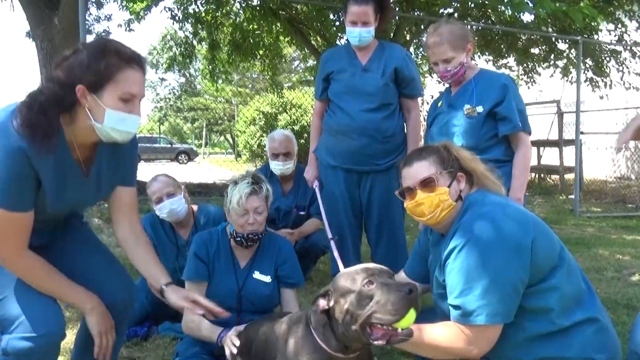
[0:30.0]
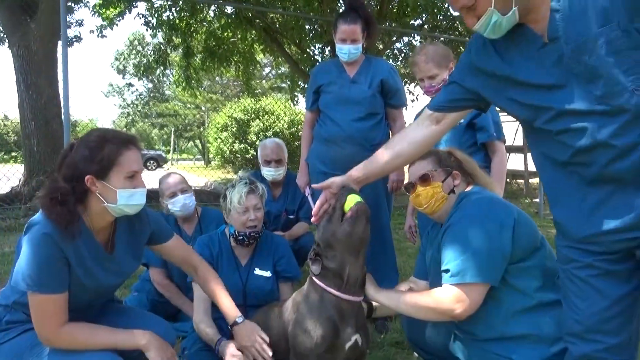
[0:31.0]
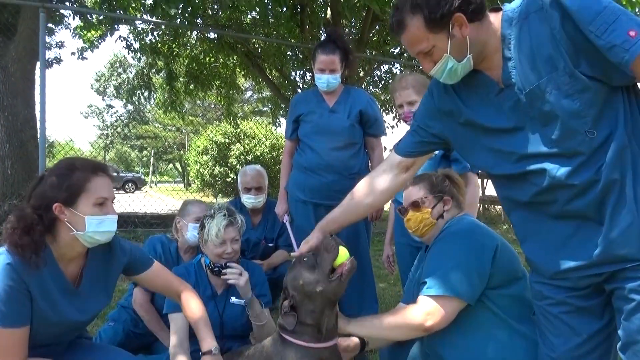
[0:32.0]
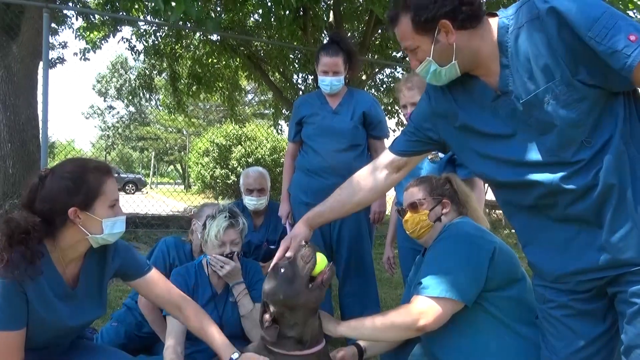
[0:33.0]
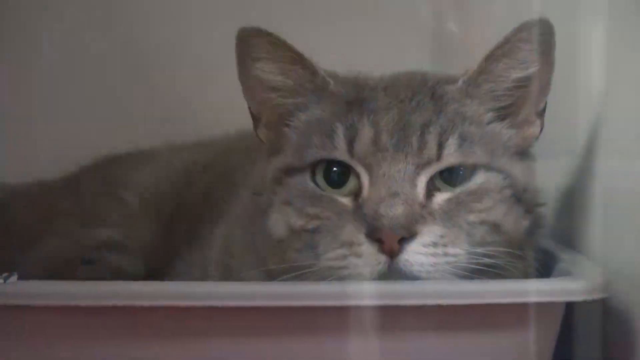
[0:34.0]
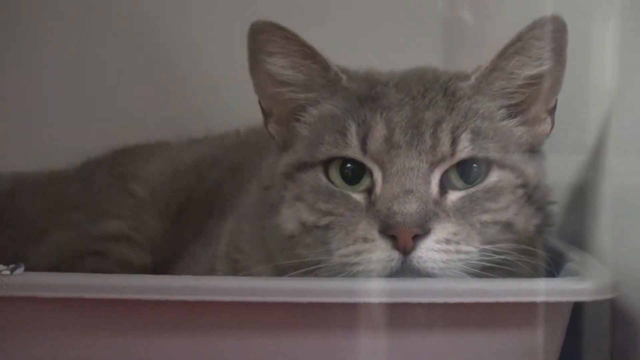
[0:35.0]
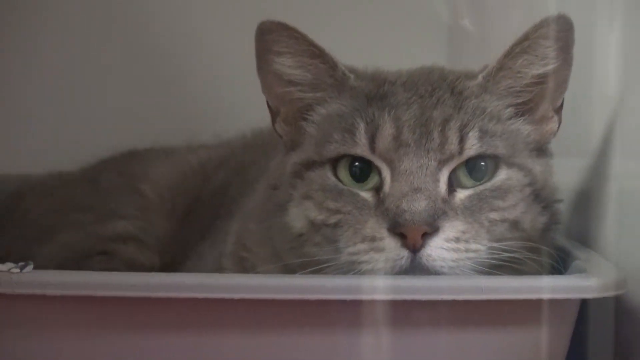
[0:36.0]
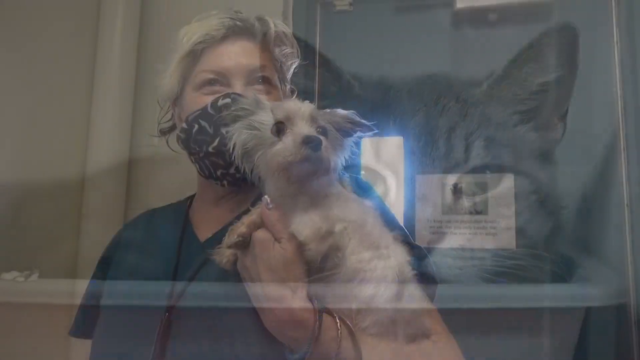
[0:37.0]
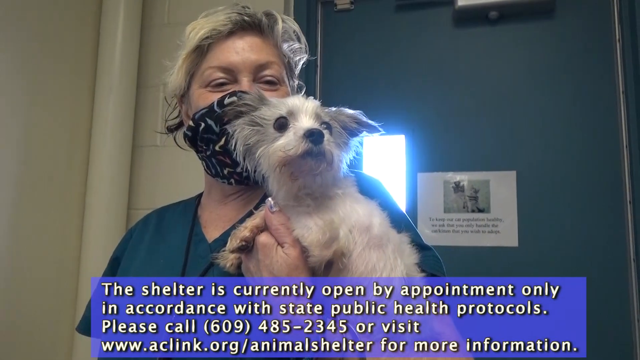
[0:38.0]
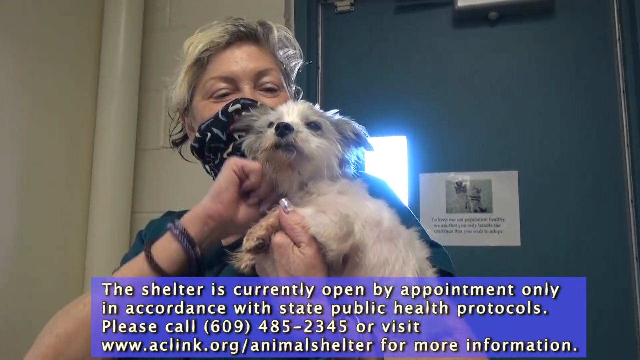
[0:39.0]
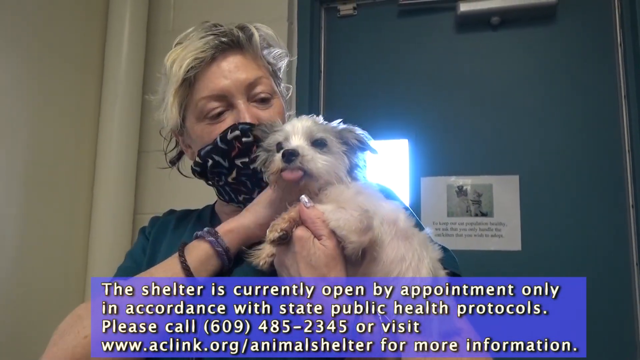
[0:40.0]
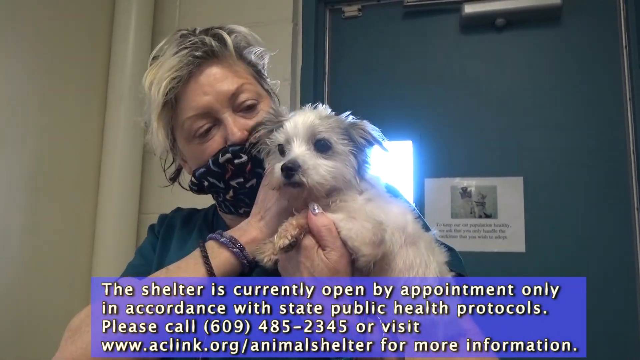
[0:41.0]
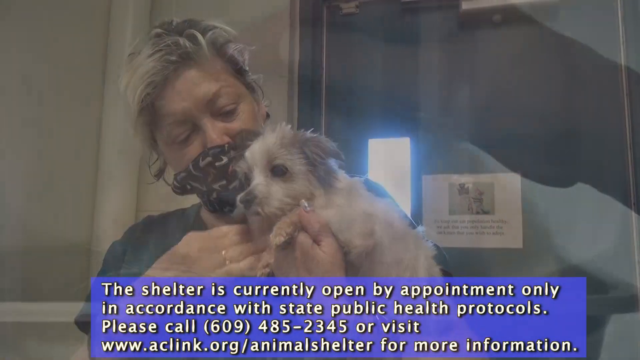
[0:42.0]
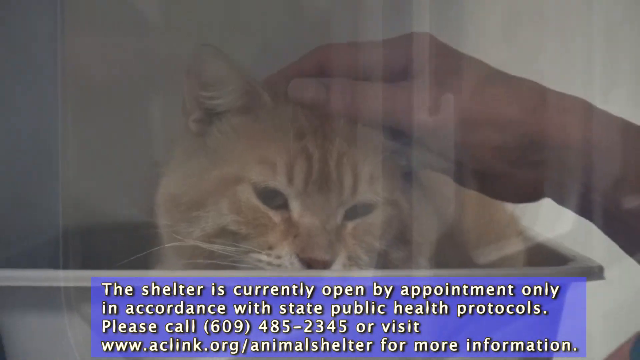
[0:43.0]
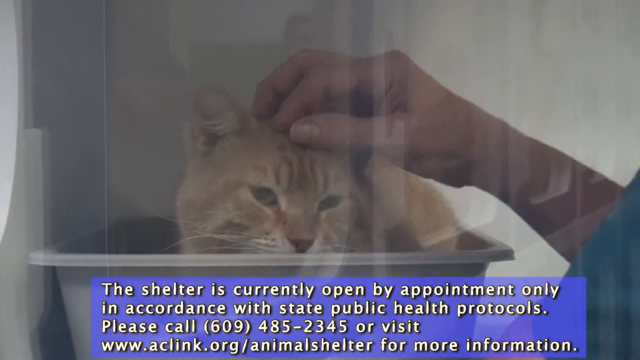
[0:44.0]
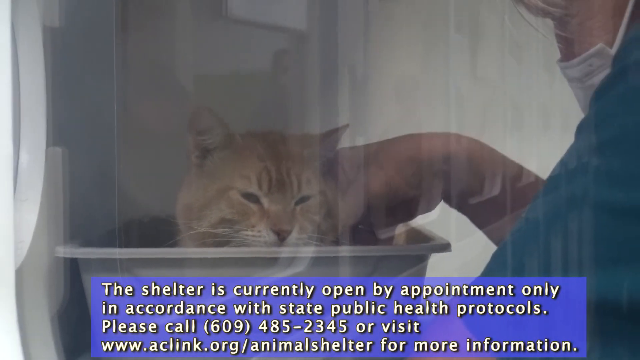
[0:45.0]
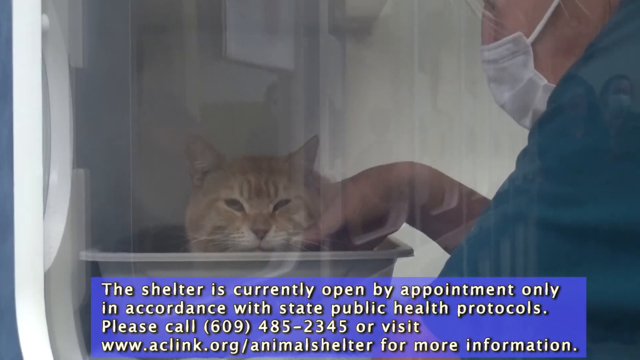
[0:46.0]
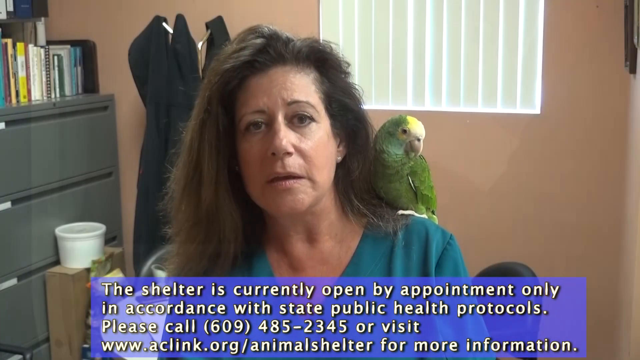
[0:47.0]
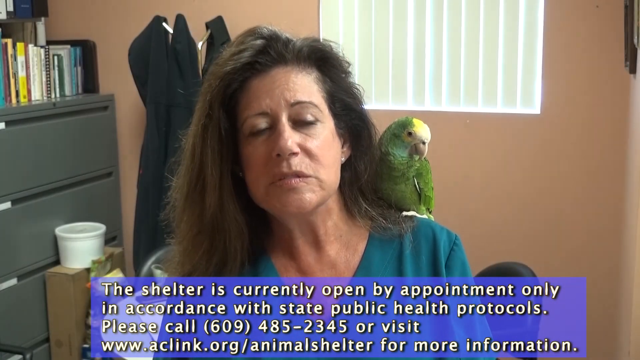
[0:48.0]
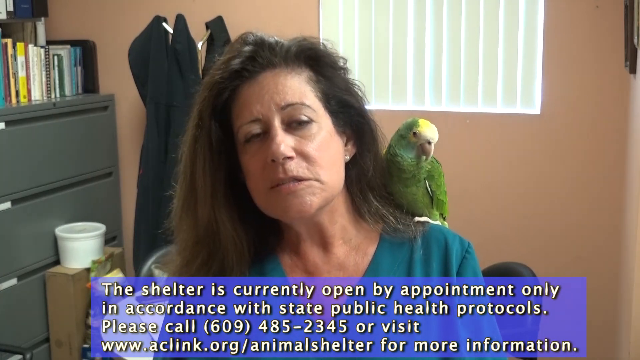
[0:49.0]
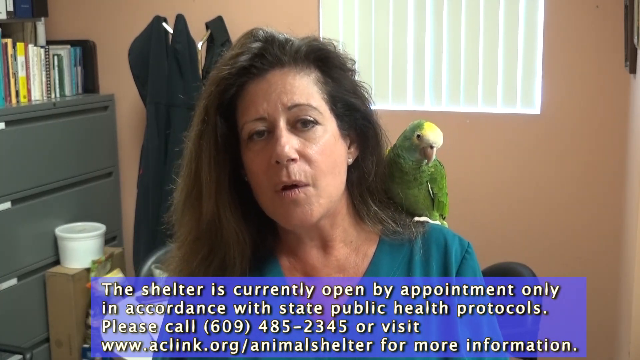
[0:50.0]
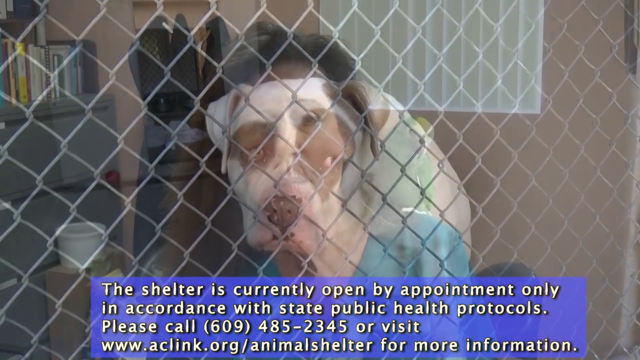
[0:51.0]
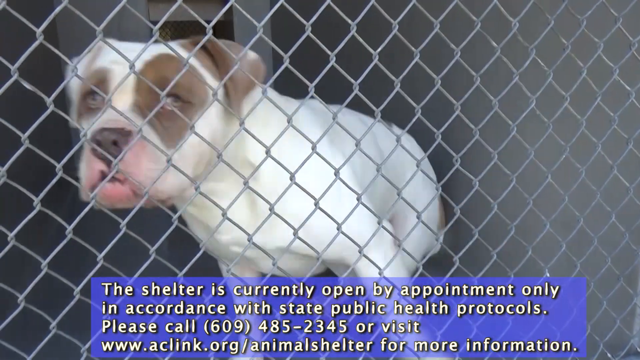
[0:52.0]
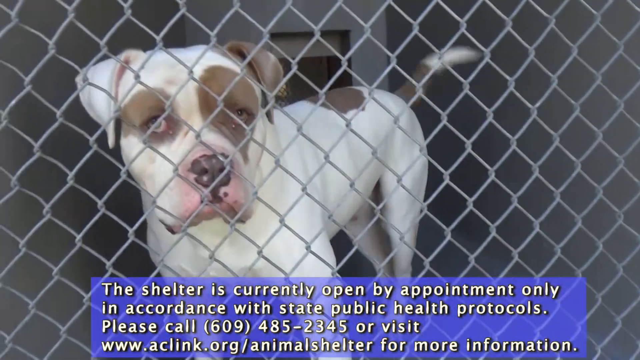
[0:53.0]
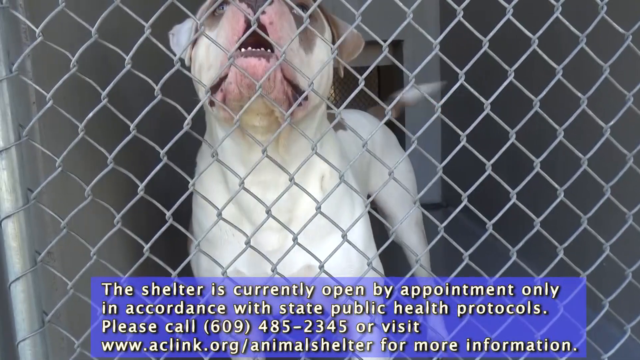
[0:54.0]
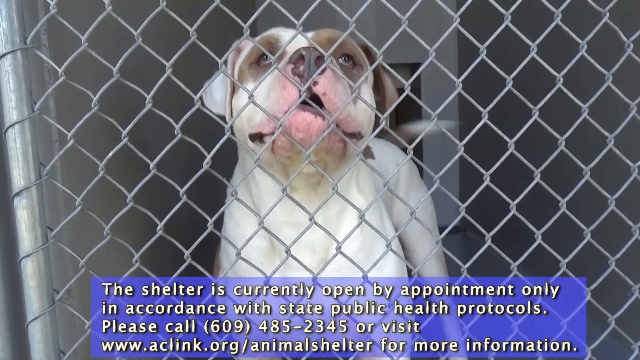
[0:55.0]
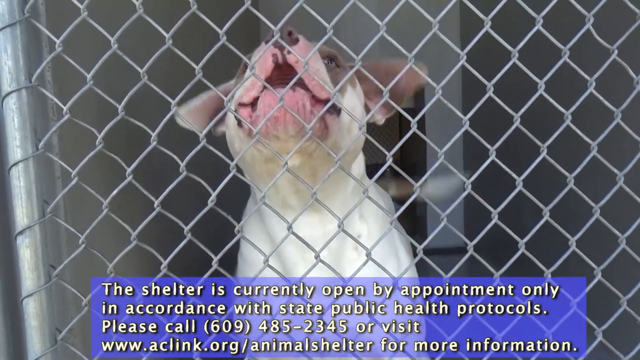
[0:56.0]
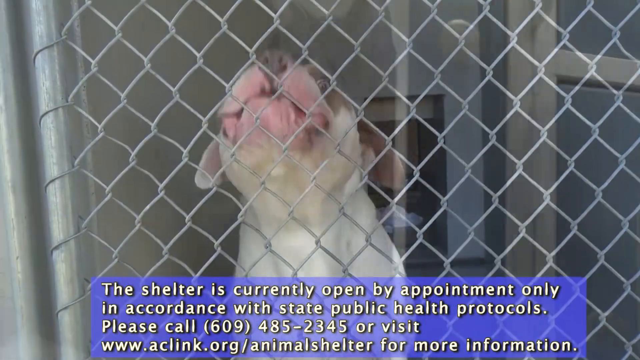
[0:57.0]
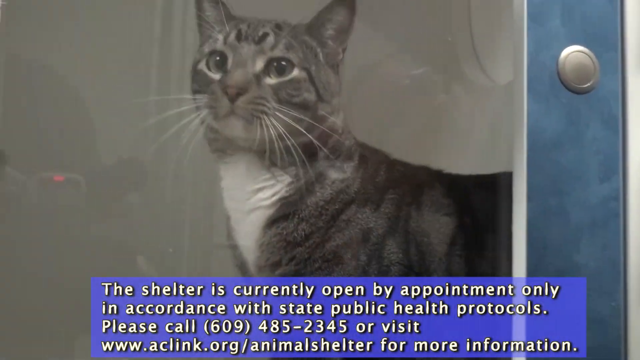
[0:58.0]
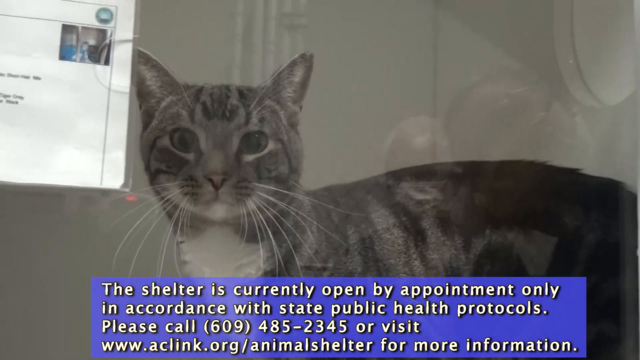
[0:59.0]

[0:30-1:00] Eight animal shelter staff wearing scrubs and masks are all petting a brown pit bull with a tennis ball in its mouth. The video transitions to a gray cat sitting inside a box, then to a middle-aged white female medical staff member holding a small white dog. A blue rectangle at the bottom center of the screen reads "The shelter is currently open by appointment only in accordance with state public health protocols. Please call 609-485-2345 or visit www.aclink.org\animal shelter for more information." Next, the right hand of a shelter staff member pets an orange cat. The video cuts to shelter manager Kathy Kelsey, still wearing the green parrot on her left shoulder. Another bulldog follows, white with brown circles around its eyes; it is behind a chain-link fence and is barking. The video then shows another cat, gray and white, behind glass.